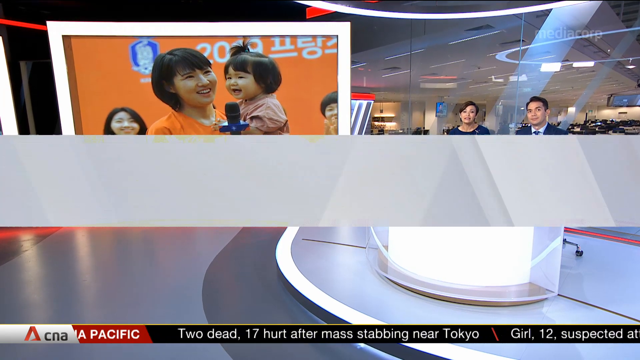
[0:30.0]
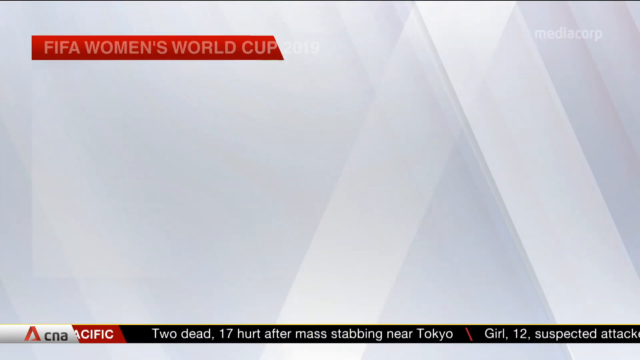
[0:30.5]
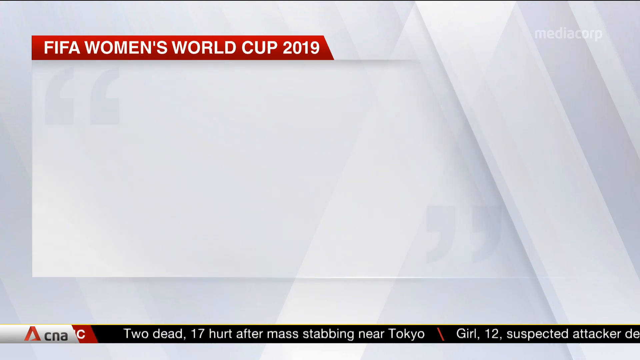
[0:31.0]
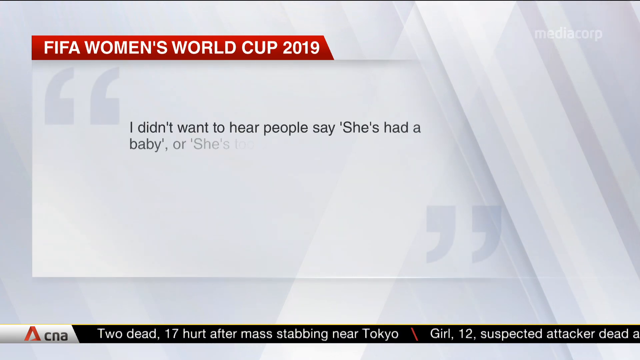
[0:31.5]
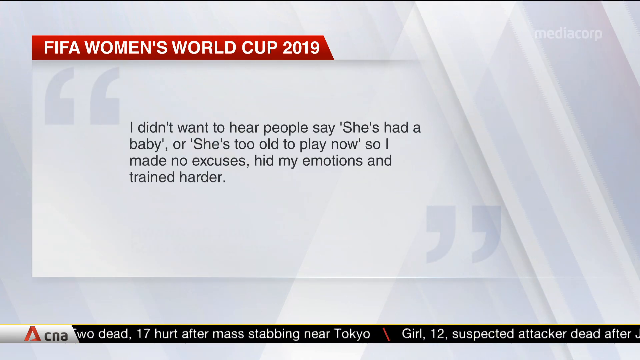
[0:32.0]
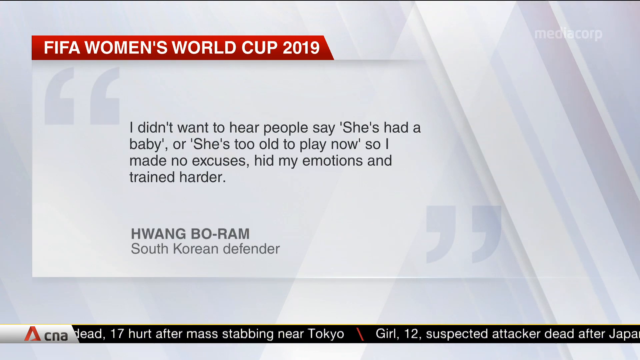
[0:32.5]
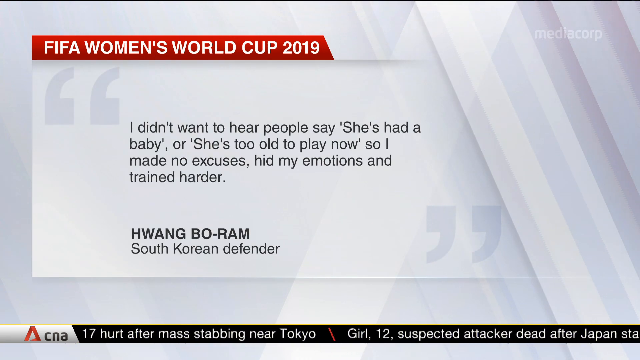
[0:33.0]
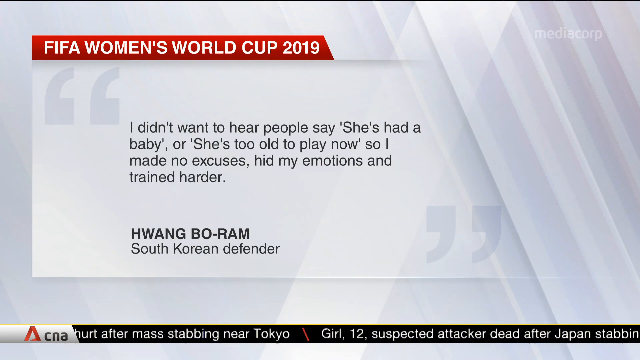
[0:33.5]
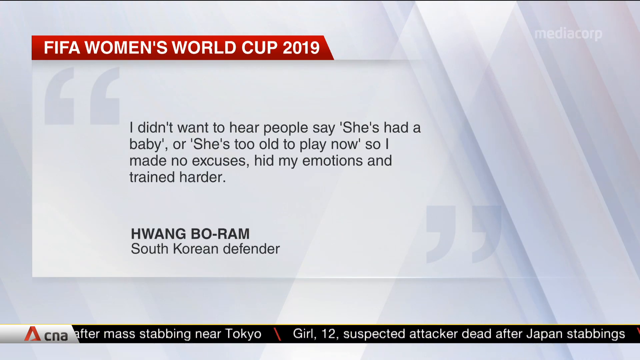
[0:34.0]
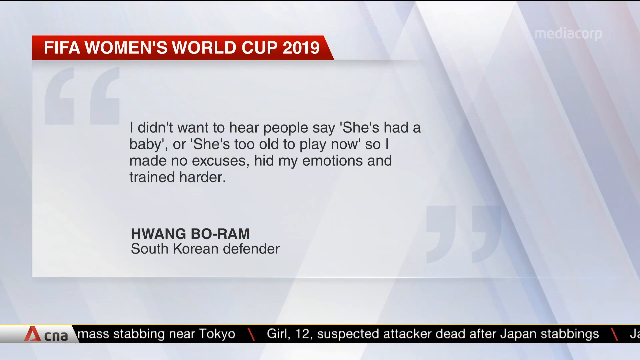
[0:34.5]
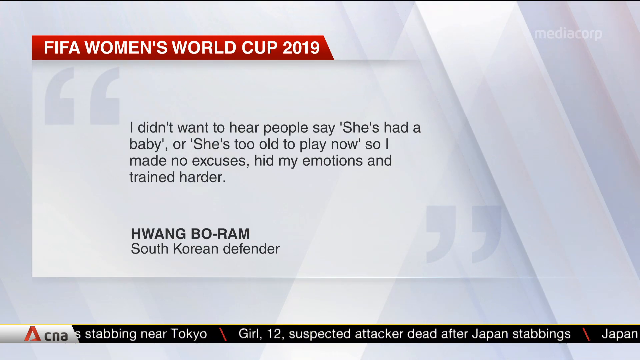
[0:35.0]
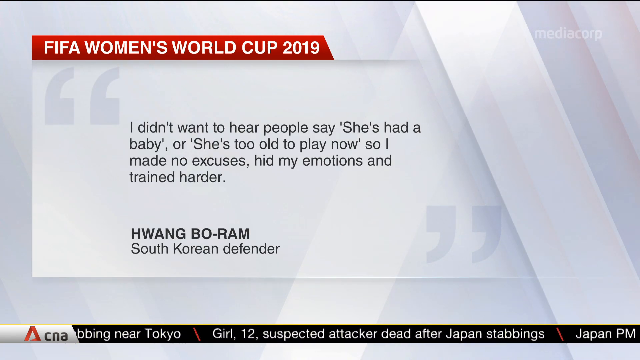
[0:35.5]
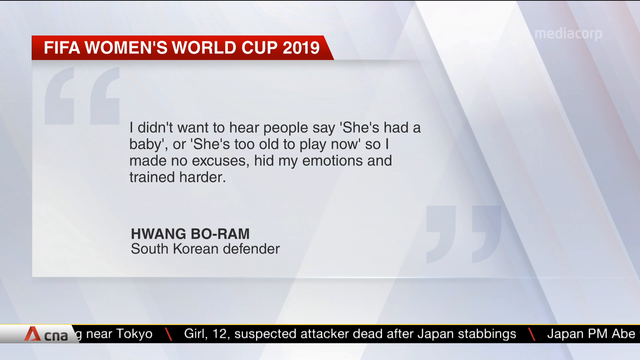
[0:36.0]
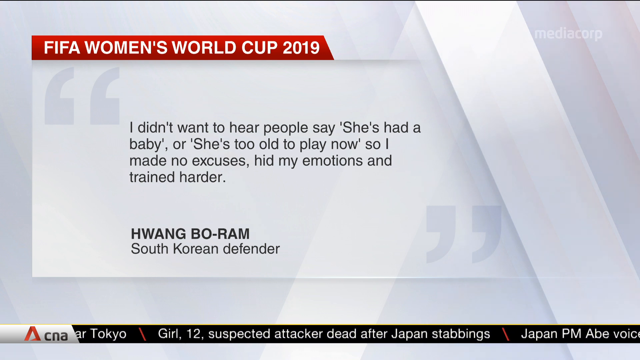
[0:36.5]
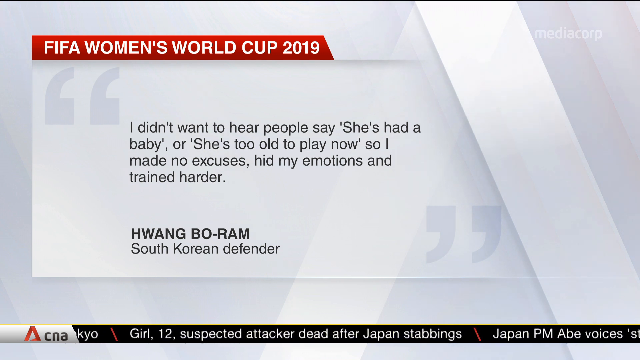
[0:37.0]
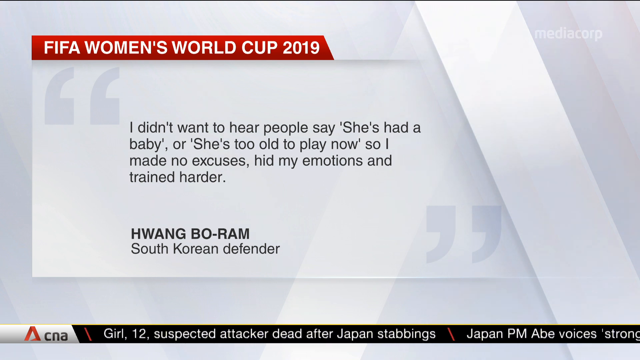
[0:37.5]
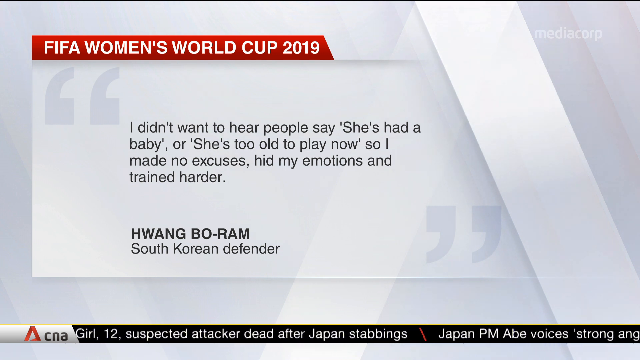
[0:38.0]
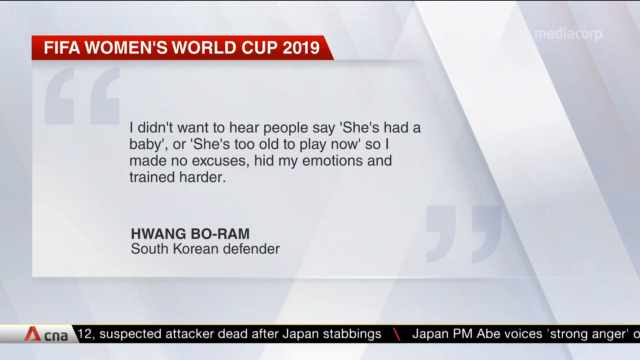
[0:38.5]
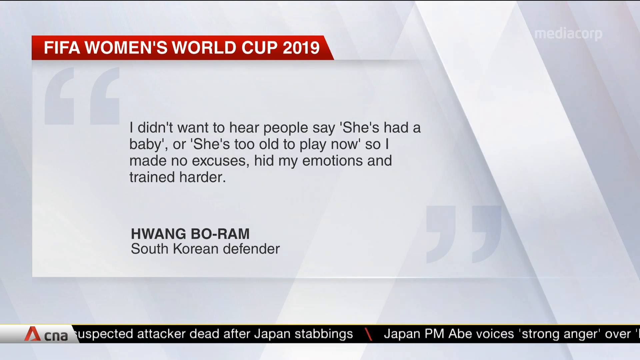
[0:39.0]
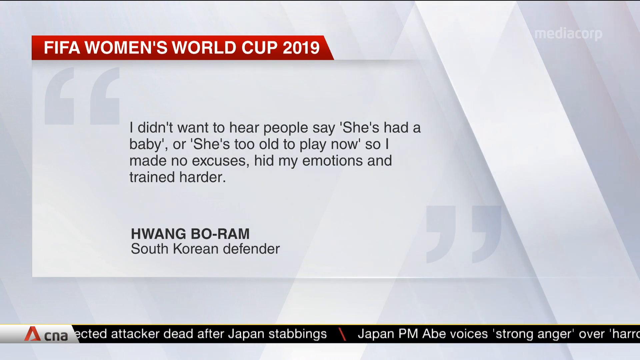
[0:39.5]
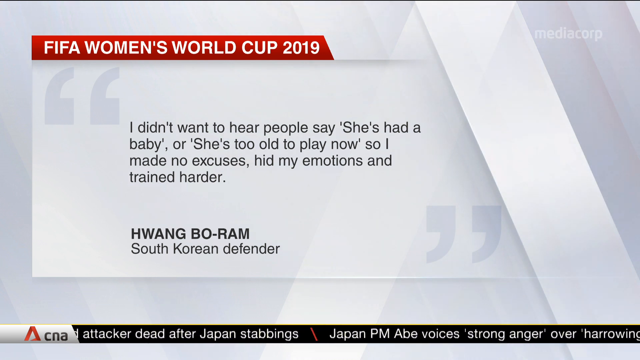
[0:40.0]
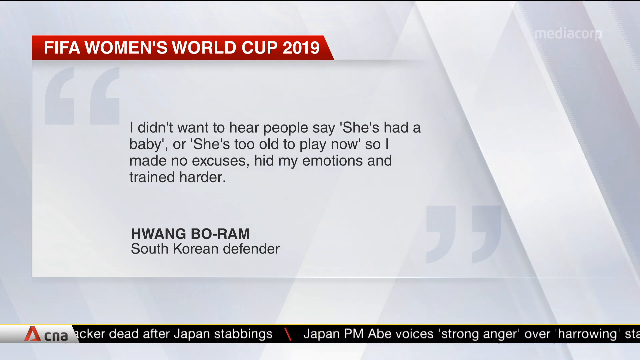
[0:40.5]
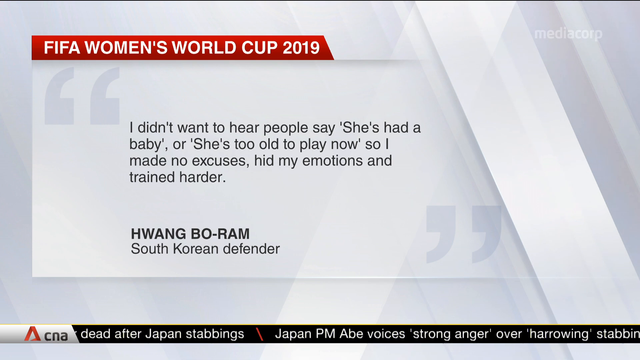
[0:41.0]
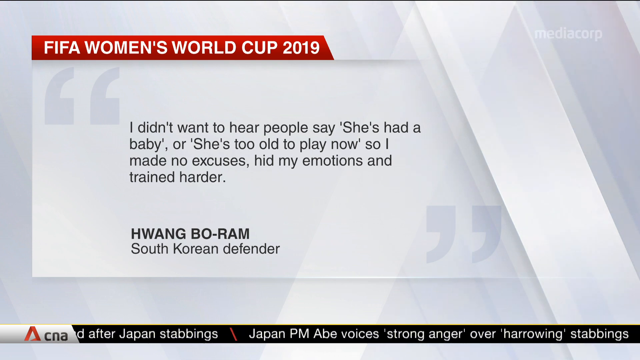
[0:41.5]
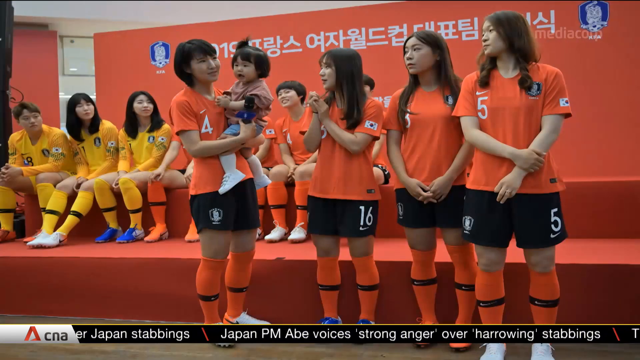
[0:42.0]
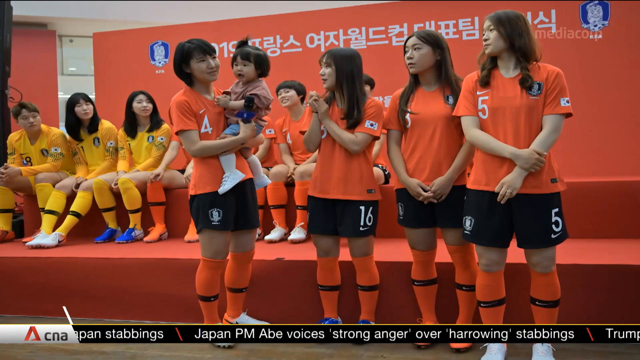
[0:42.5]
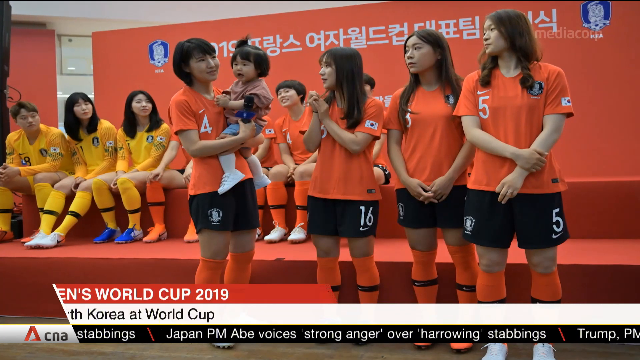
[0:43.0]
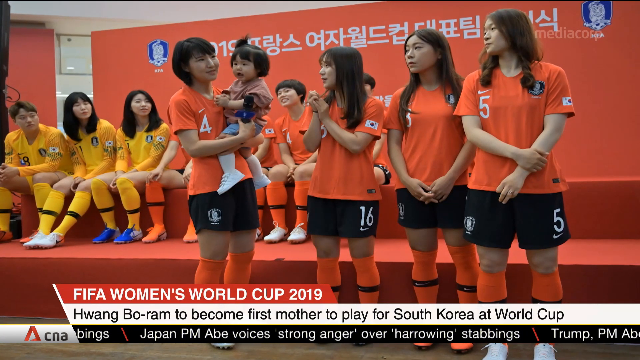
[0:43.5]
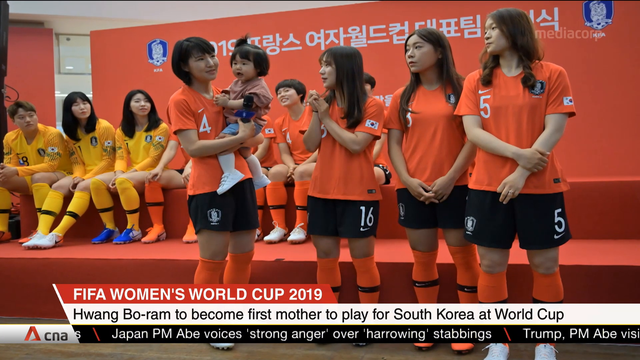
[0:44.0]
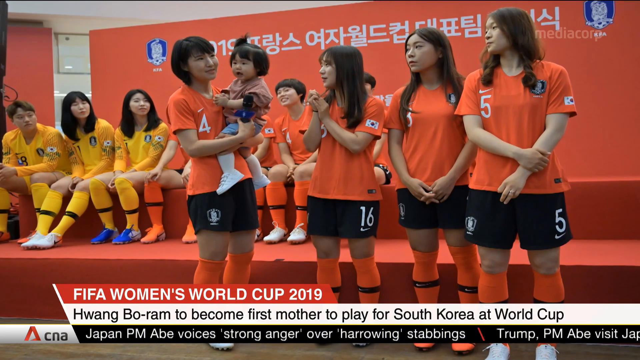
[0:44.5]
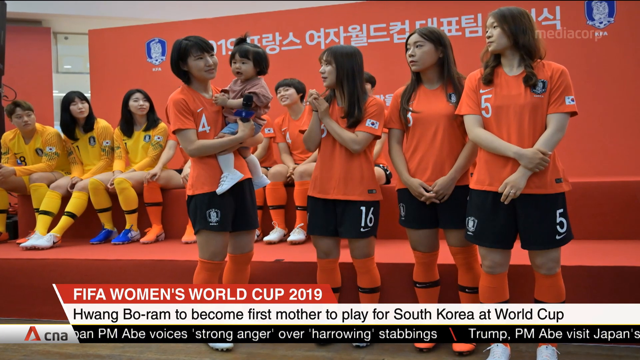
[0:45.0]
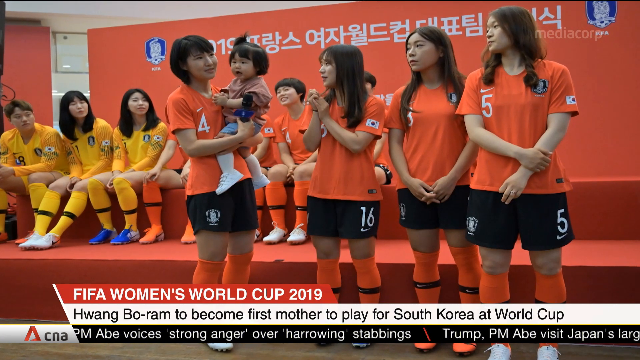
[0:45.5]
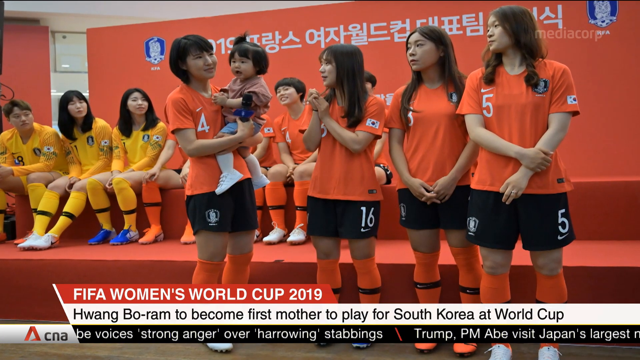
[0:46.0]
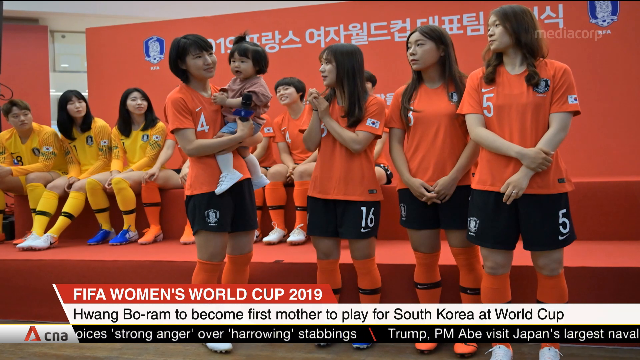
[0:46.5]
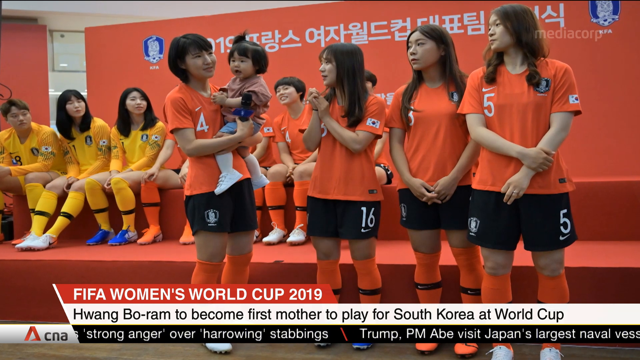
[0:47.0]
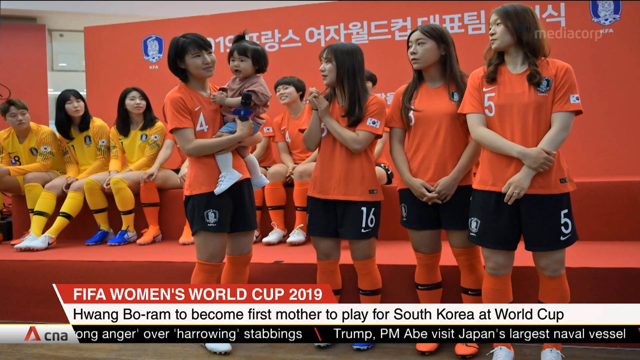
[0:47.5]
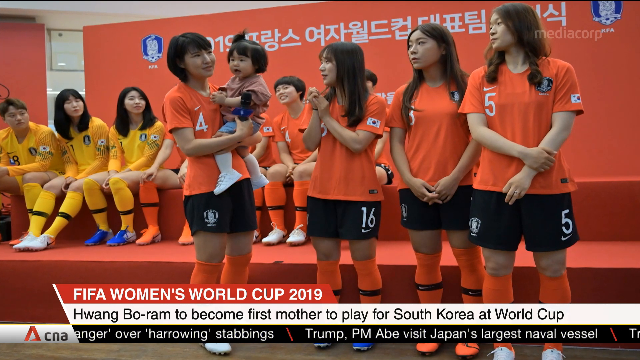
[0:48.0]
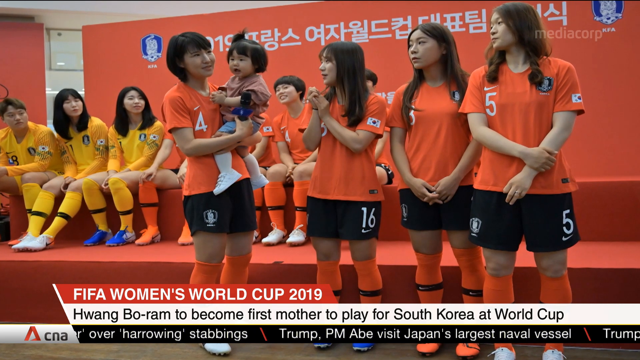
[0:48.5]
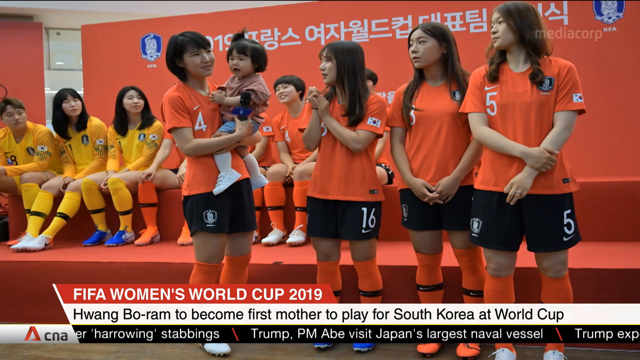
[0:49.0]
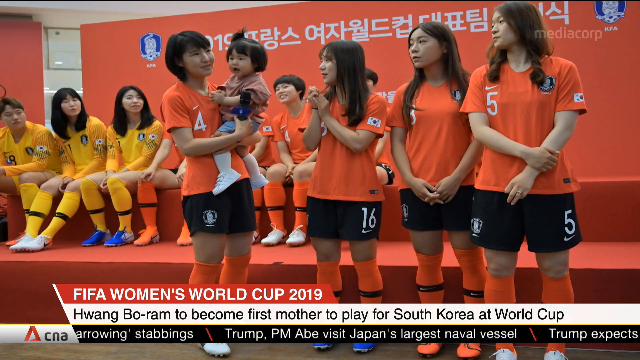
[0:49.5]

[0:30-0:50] A note from Hwang Boram, a South Korean defender, appears on the screen. It reads: "I didn't want to hear people say she's had a baby" and continues, "I made no excuses, hid my emotions and trained harder for women's World Cup 2019." At the top right, the news is shown to be from Mediacorp. The text is on a white background, where white shapes that look animated move from one point to another. The next screen shows a static photo of a woman holding a child, with a microphone in hand. Other women stand next to her and appear to be staring at her. In the background, another set of women in yellow are looking directly at her. The main title of the news remains FIFA Women's World Cup.